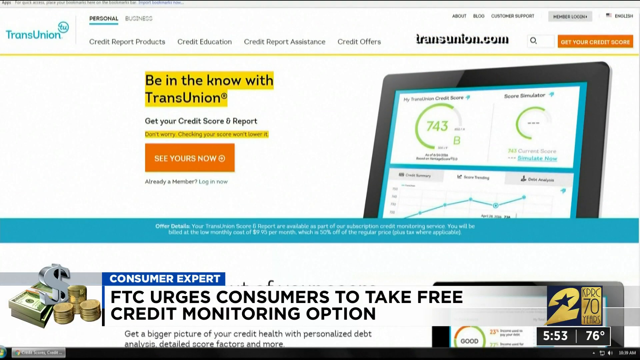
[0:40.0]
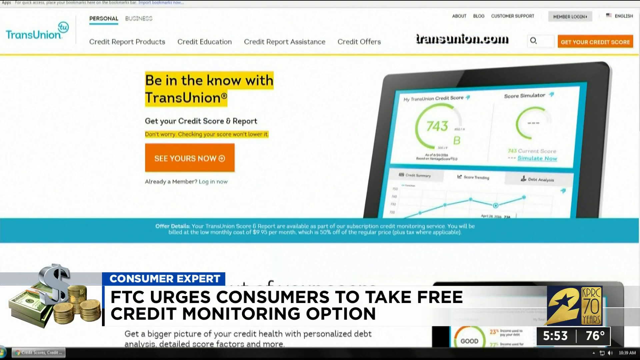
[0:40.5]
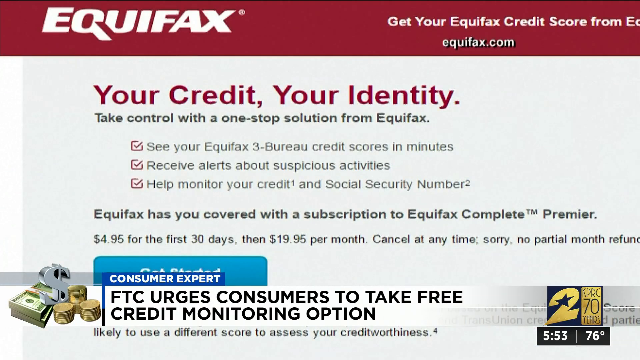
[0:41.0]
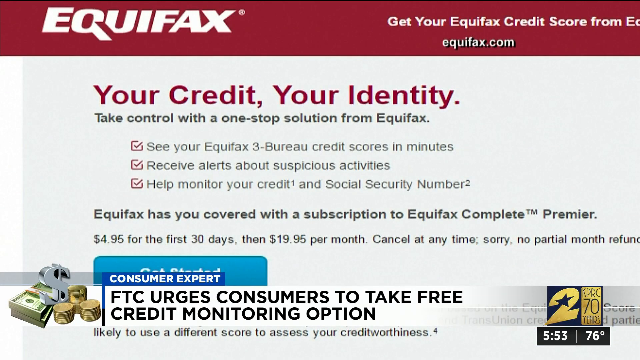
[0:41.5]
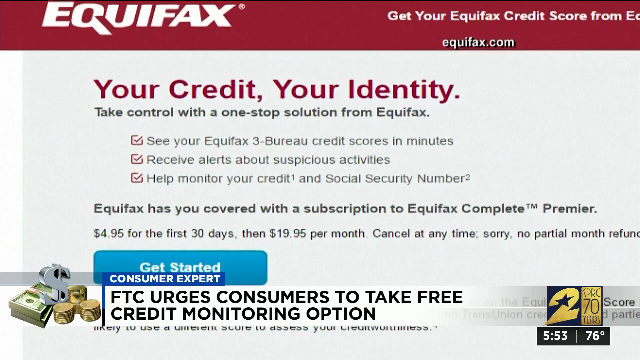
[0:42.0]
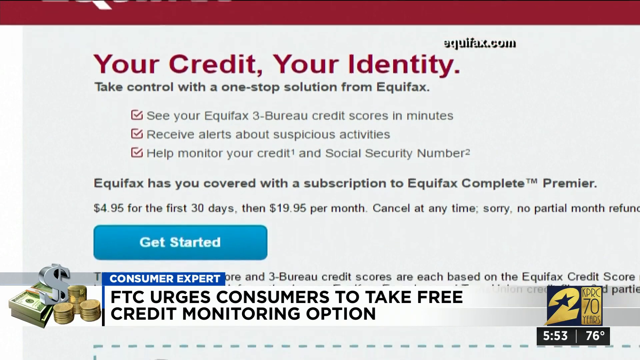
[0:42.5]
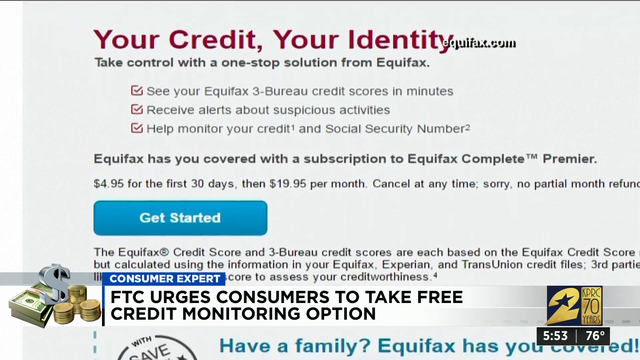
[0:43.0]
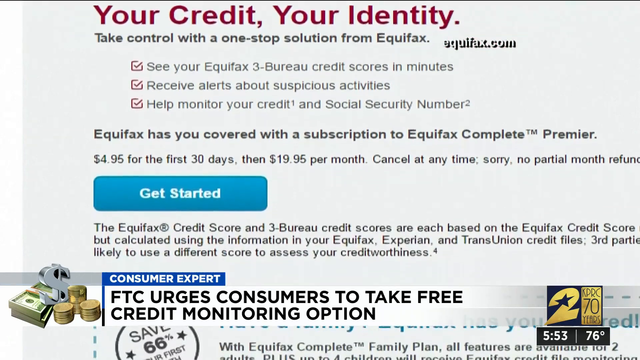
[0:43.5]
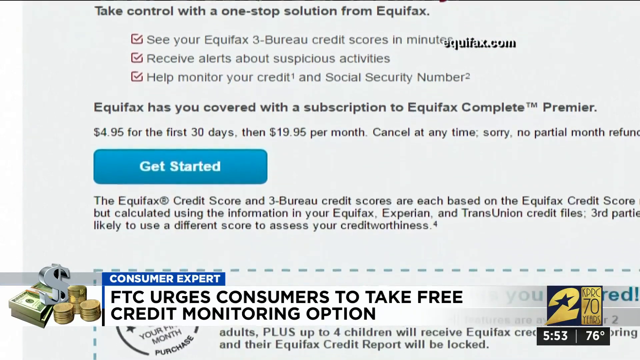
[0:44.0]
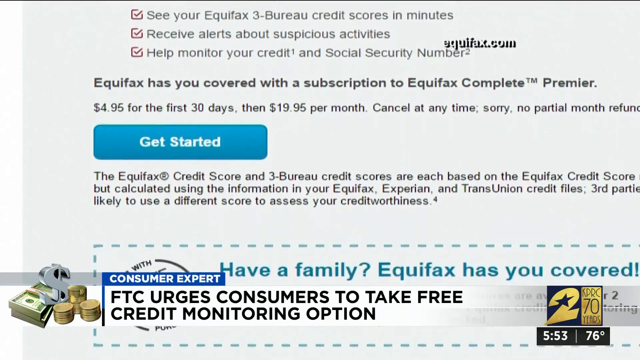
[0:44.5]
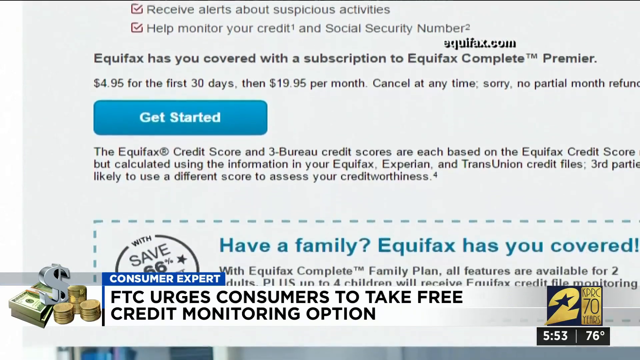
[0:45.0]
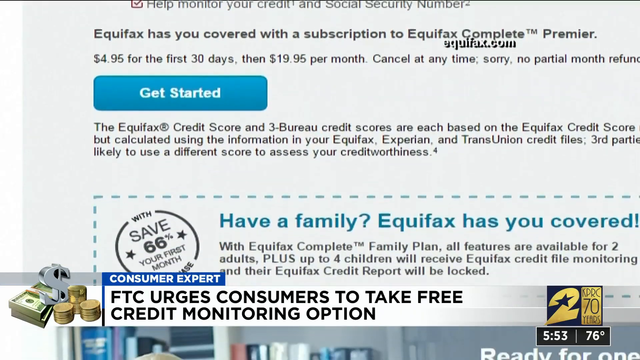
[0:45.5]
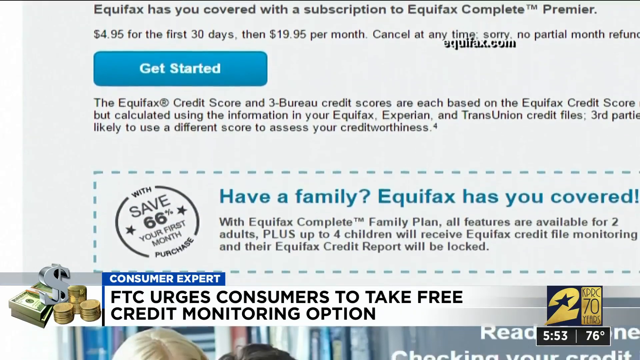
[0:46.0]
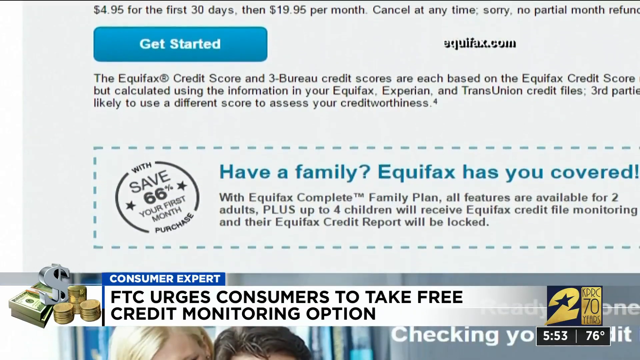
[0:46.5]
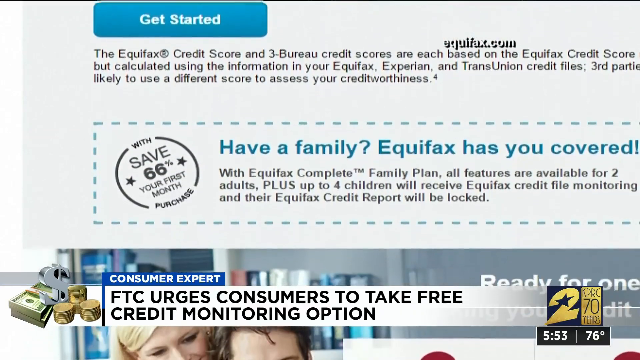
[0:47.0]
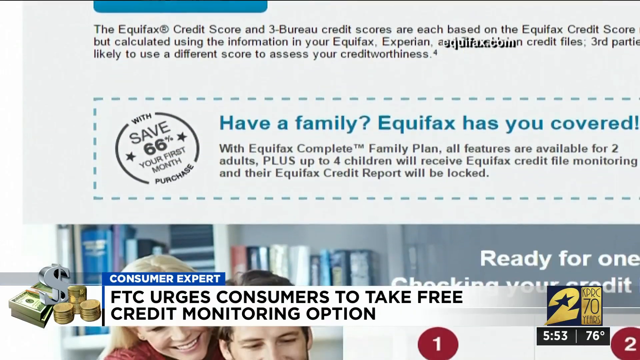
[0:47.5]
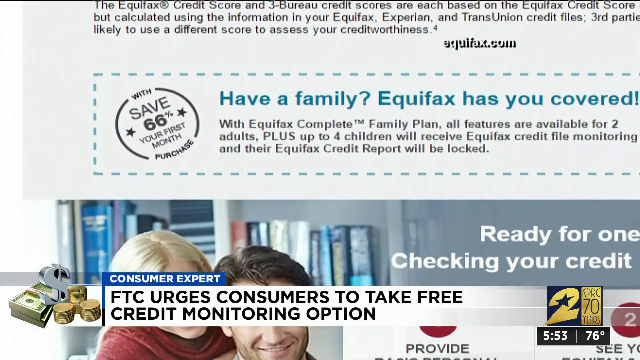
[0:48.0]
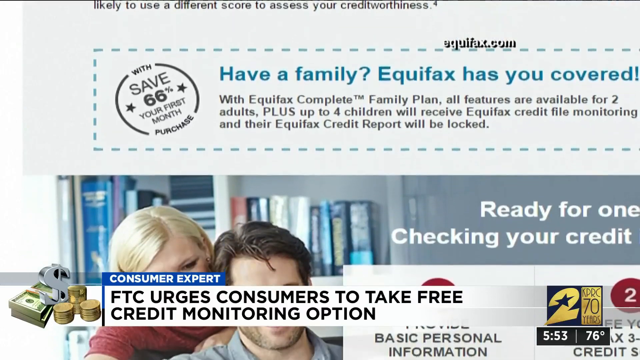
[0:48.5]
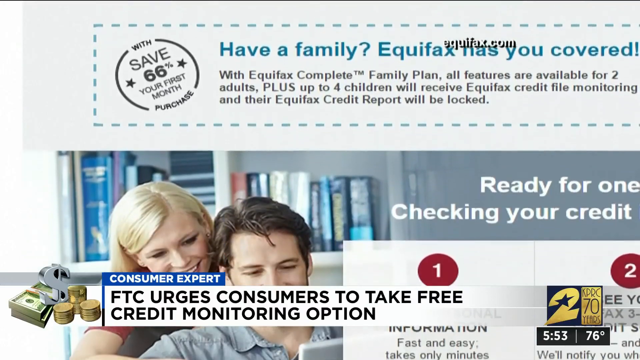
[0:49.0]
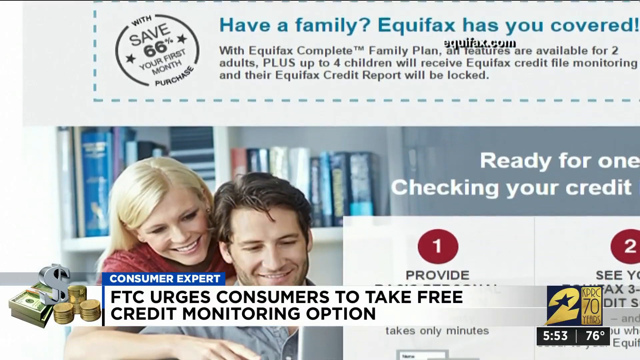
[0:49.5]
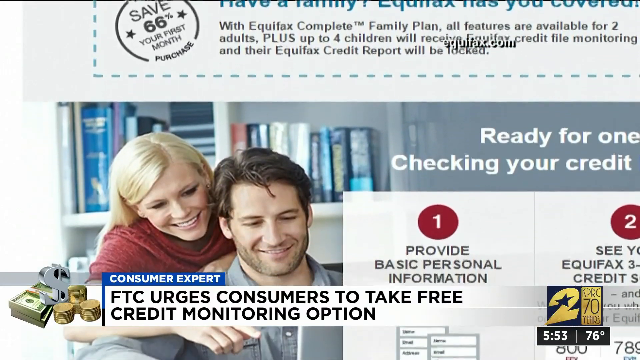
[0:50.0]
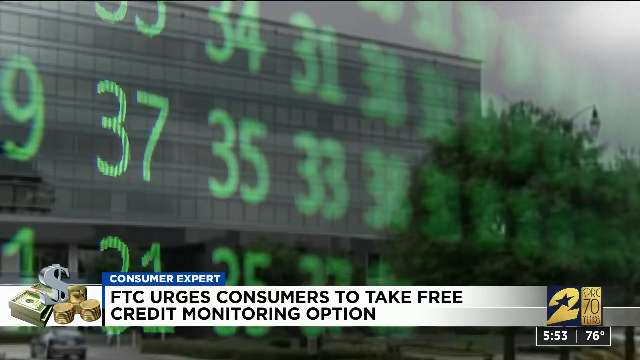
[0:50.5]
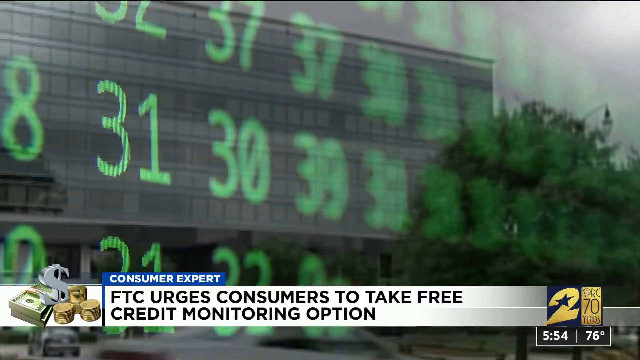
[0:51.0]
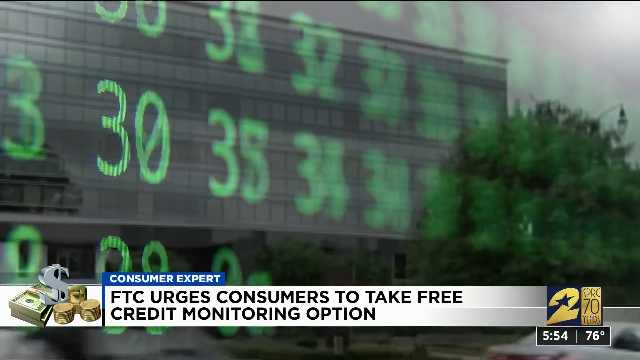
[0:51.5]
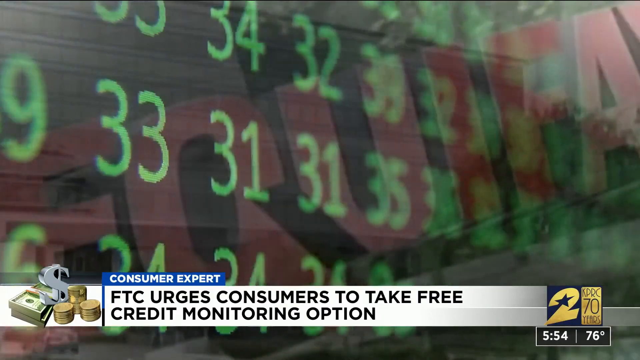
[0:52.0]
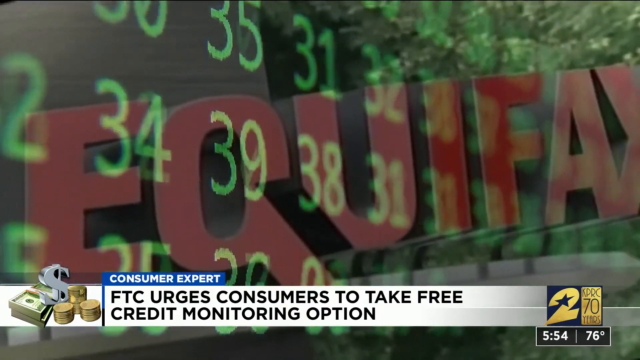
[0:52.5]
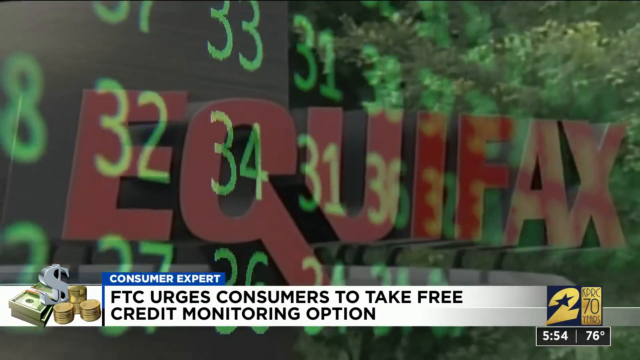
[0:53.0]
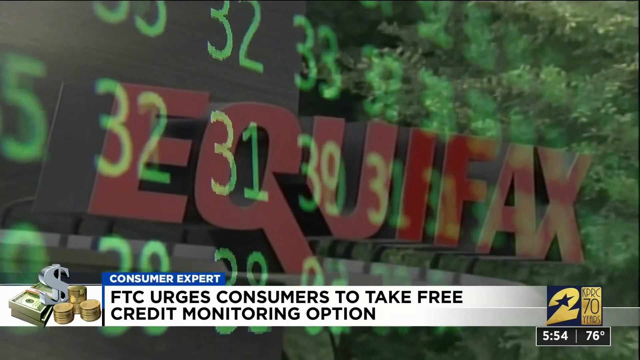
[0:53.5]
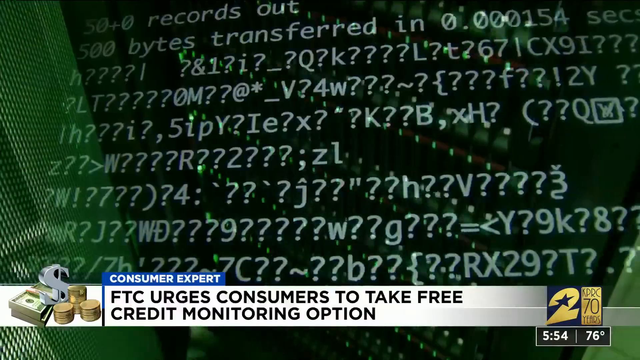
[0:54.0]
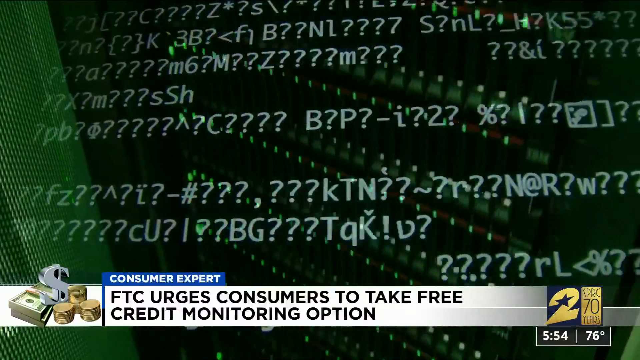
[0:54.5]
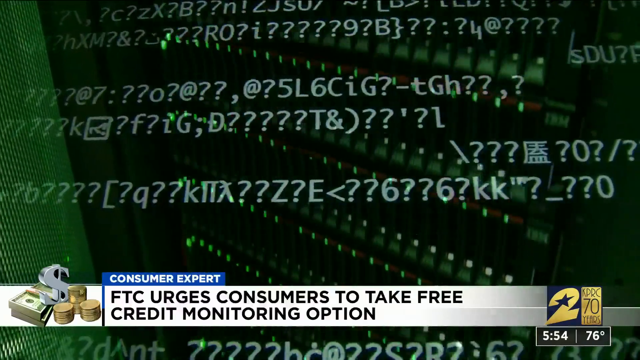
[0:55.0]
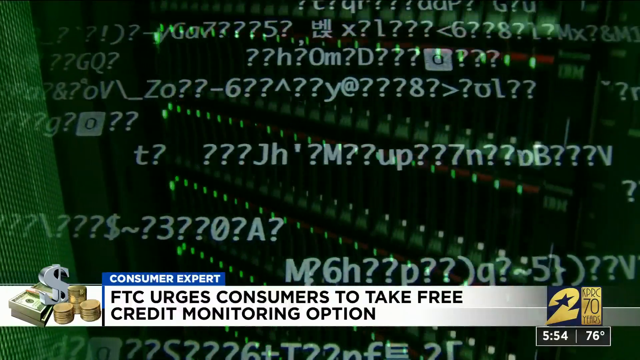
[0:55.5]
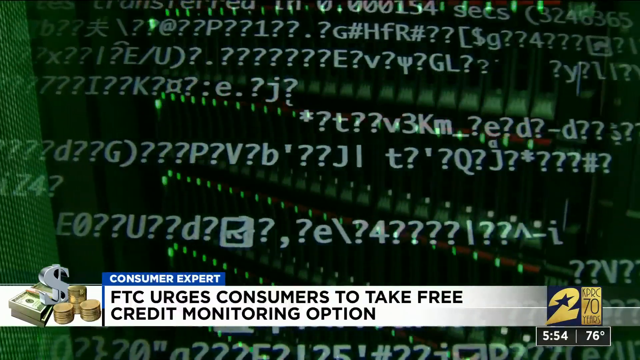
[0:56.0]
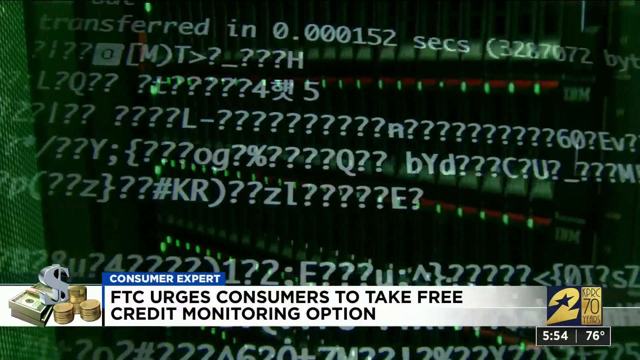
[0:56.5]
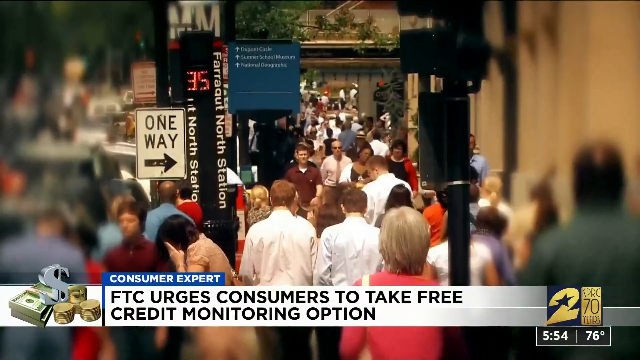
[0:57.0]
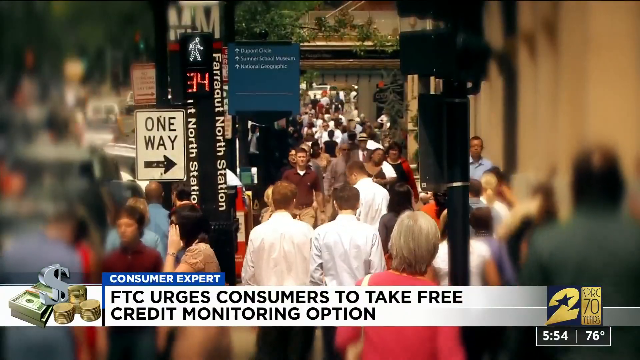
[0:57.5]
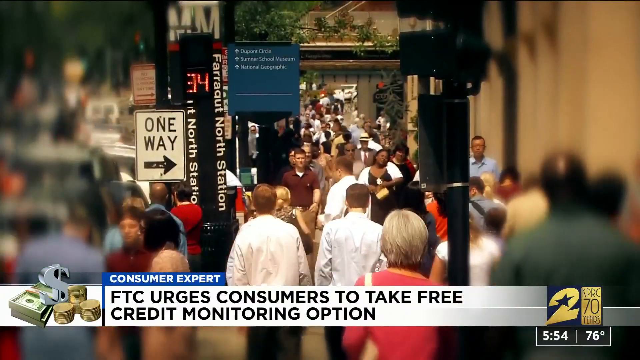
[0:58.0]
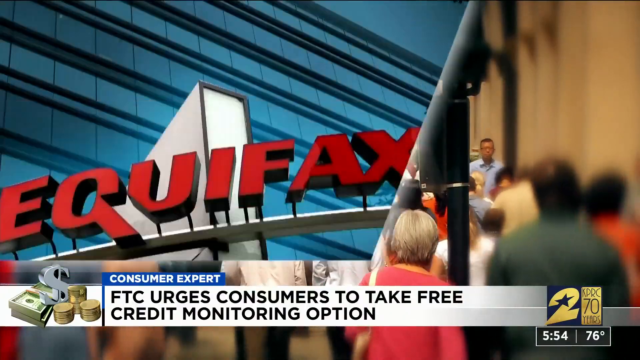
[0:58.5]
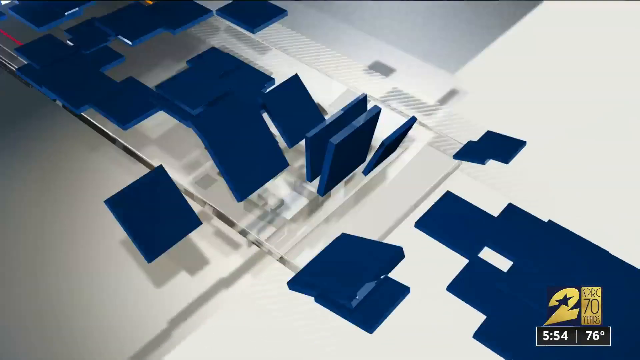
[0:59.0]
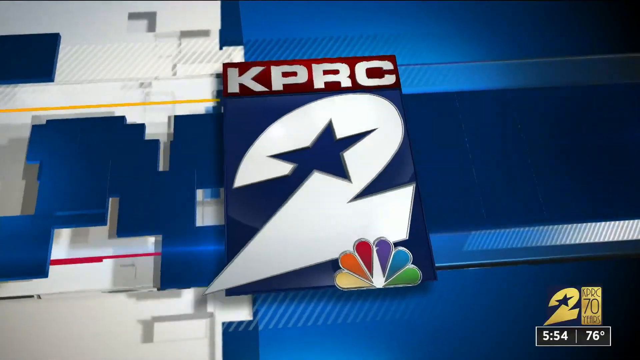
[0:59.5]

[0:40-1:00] What looks to be the TransUnion website is open in a browser. The screen then changes to what looks to be the Equifax website, showing a page with subscription information for services to see a credit report, receive alerts and help monitor credit, with a blue button reading "get started". The user scrolls down the page. At the bottom of the screen, a white box going across reads in black letters "FTC urges consumers to take free credit monitoring option", with a blue label above it reading "consumer expert". Then comes what kind of looks like a black screen with flashing green numbers, all in the 30s range, followed by a kind of transparent overlay of what looks like a red sign reading "EQUIFAX" in capital letters. Next, the screen kind of looks like a black background with a bunch of code on it: numbers, symbols and letters. Then there is a video of a busy sidewalk full of people walking, with a sign for a train station reading "Farragut North Station". A building with the Equifax logo on it flashes by quickly, followed by a blue and gray screen reading "KPRC 2".